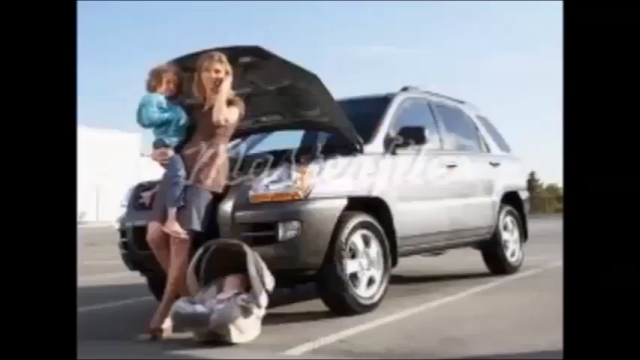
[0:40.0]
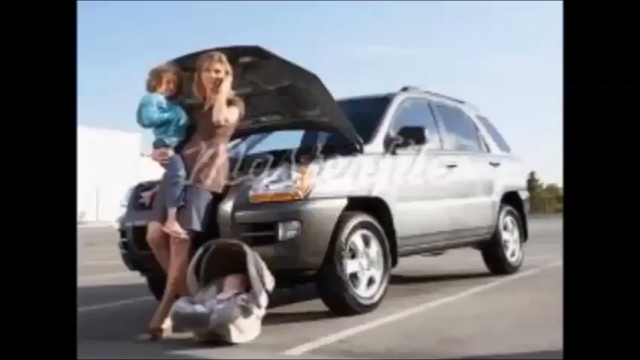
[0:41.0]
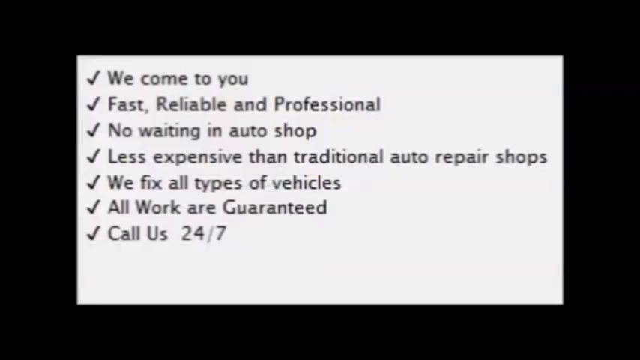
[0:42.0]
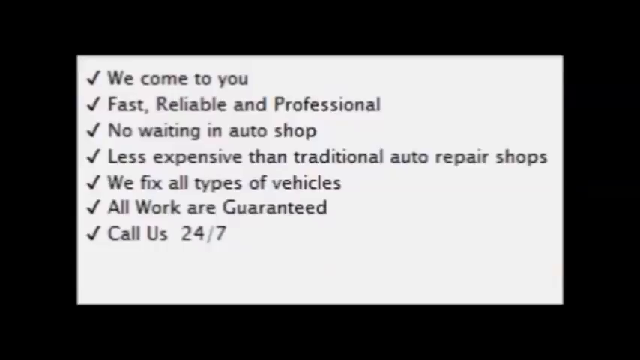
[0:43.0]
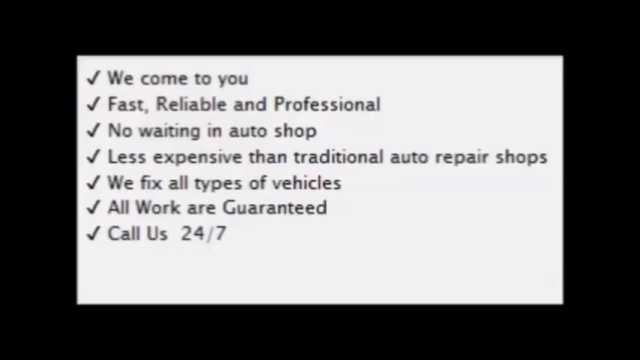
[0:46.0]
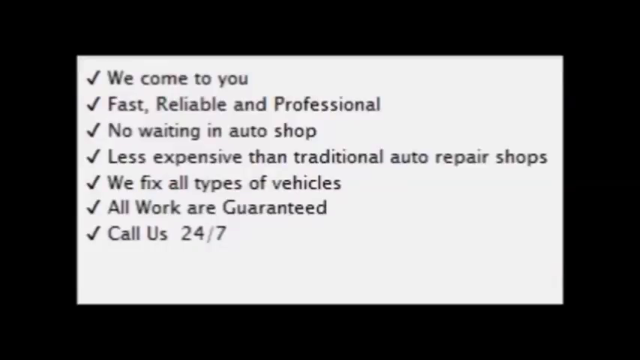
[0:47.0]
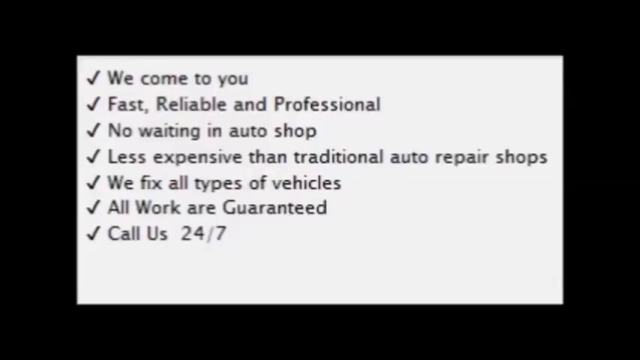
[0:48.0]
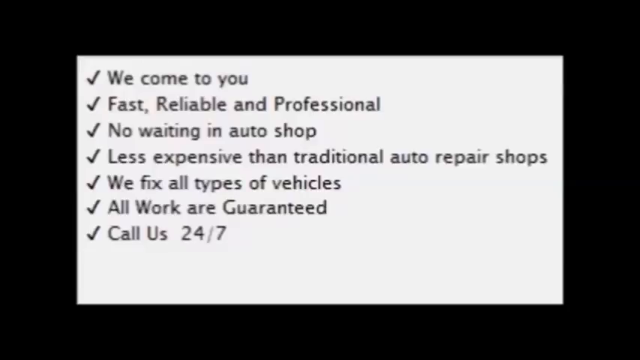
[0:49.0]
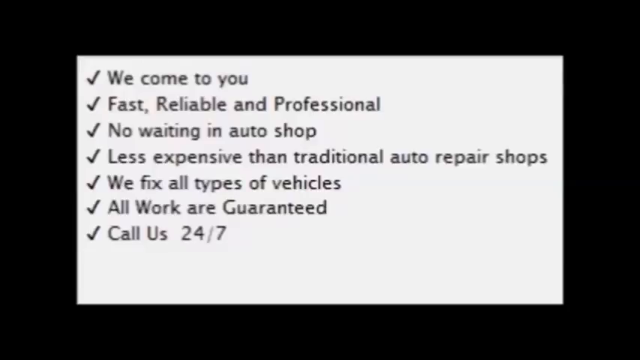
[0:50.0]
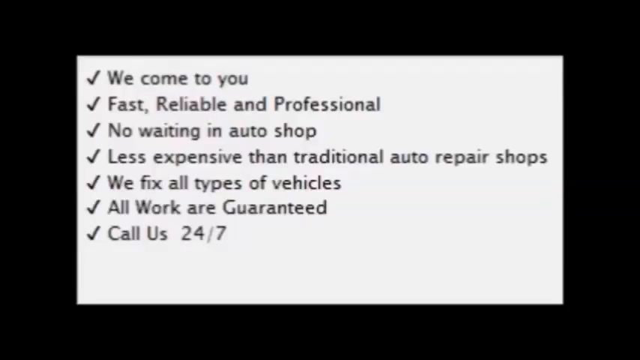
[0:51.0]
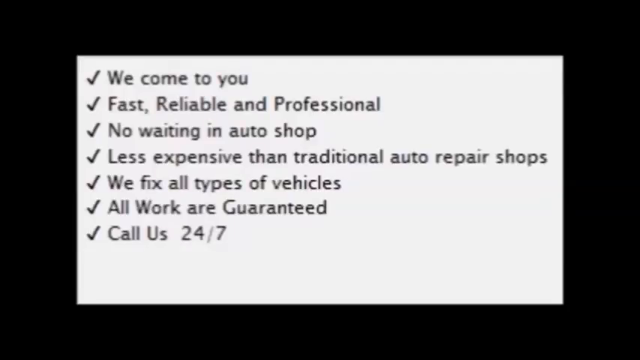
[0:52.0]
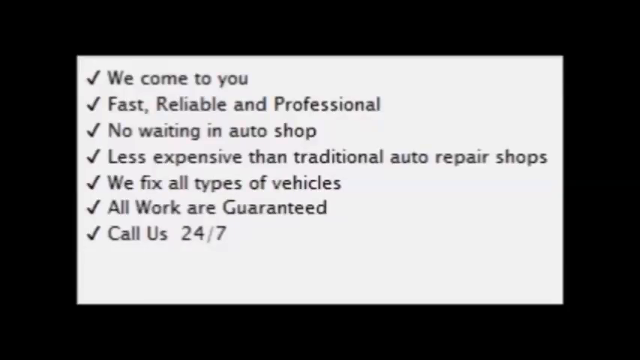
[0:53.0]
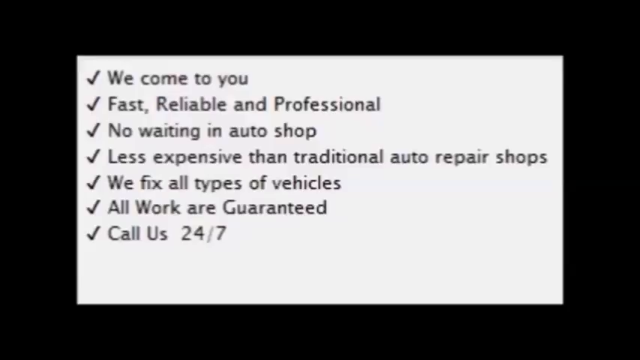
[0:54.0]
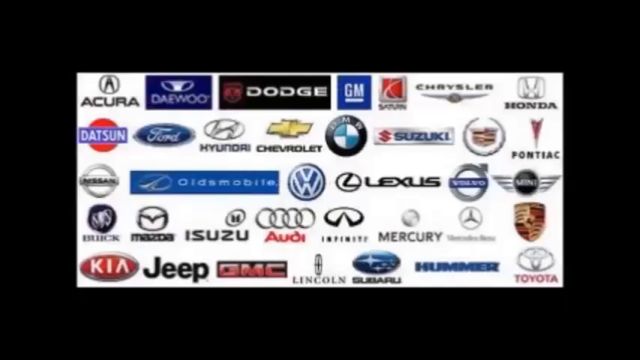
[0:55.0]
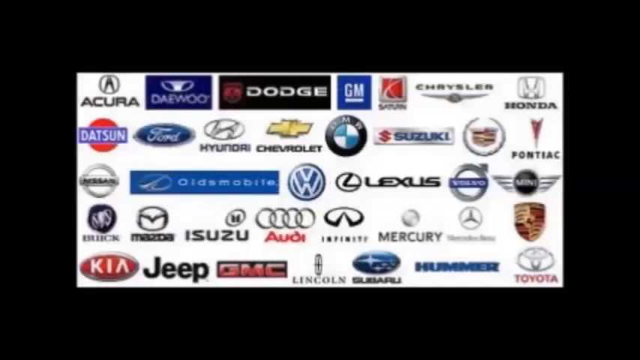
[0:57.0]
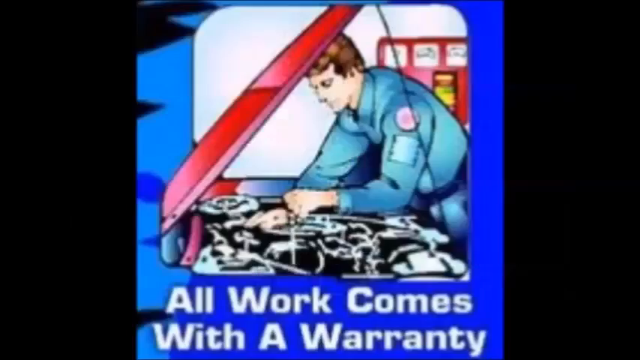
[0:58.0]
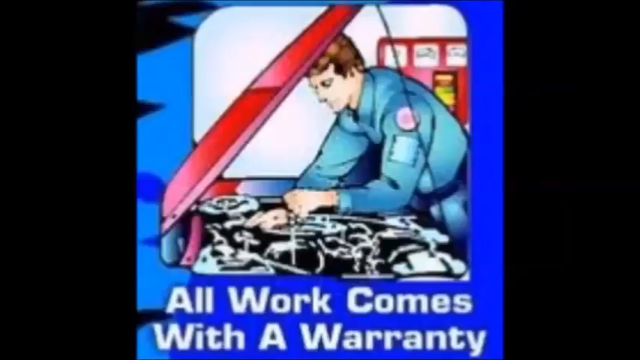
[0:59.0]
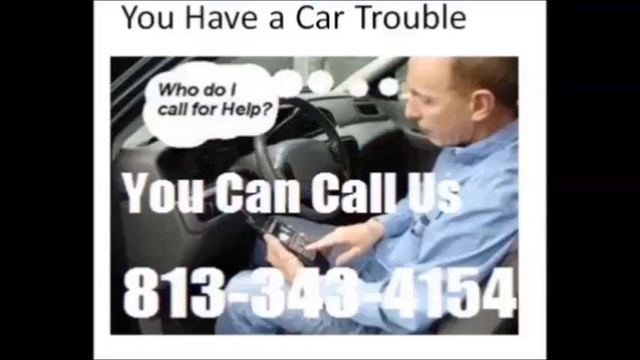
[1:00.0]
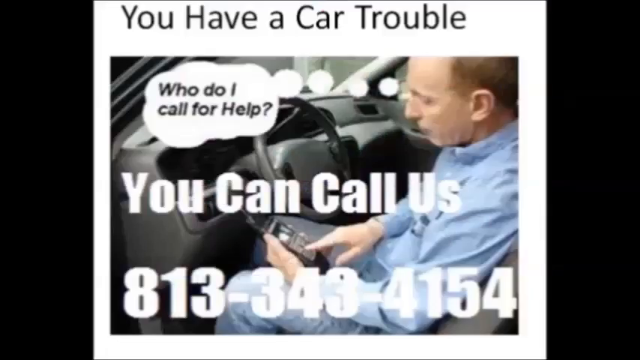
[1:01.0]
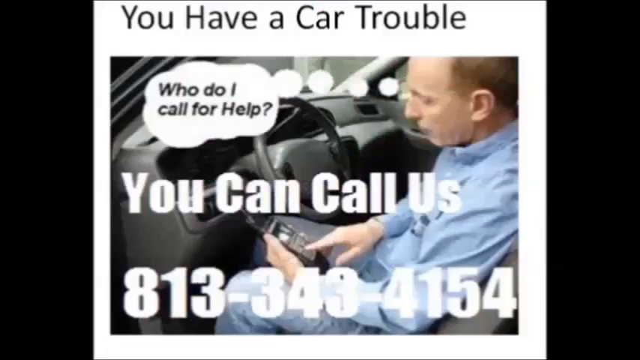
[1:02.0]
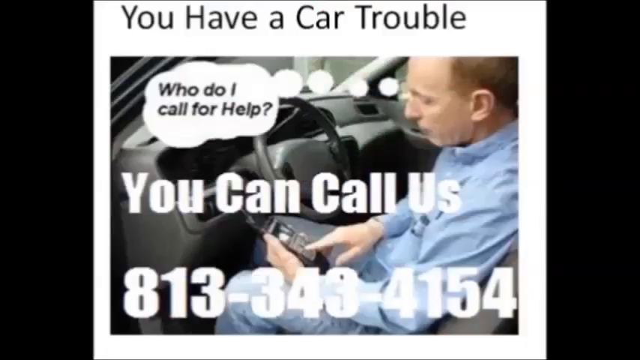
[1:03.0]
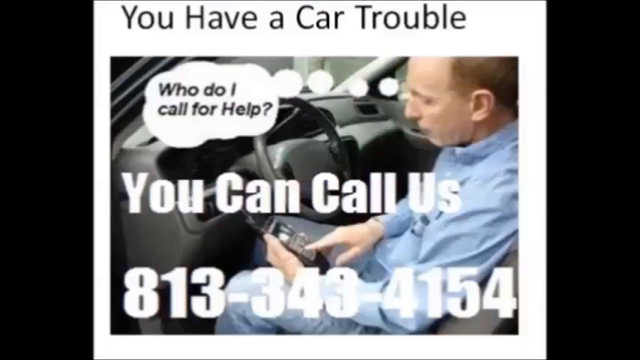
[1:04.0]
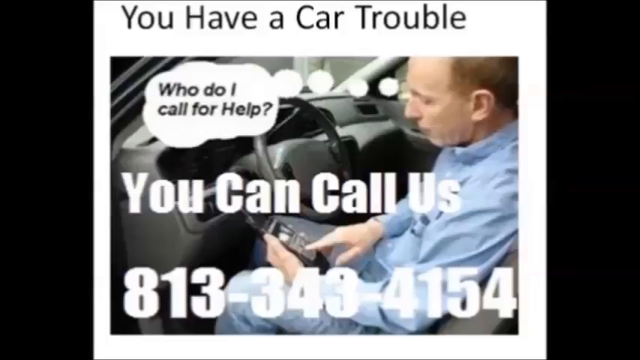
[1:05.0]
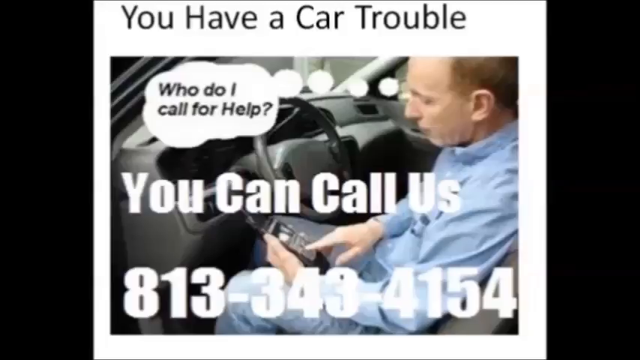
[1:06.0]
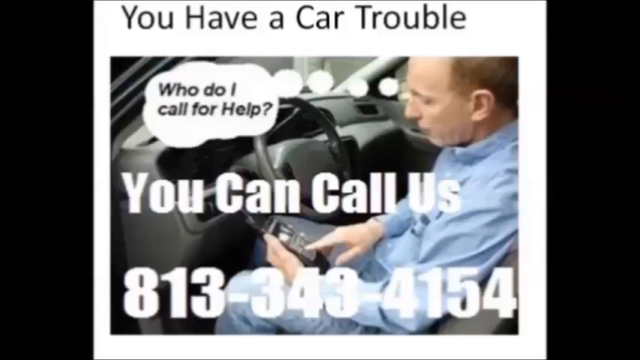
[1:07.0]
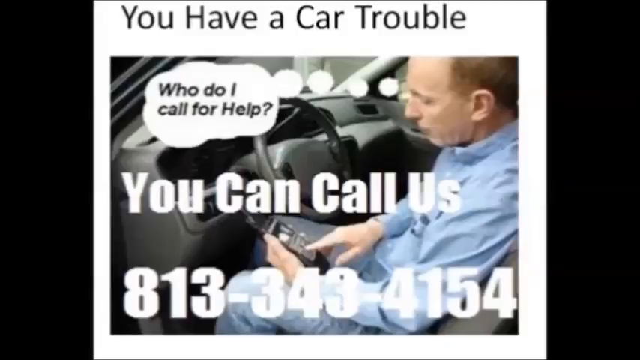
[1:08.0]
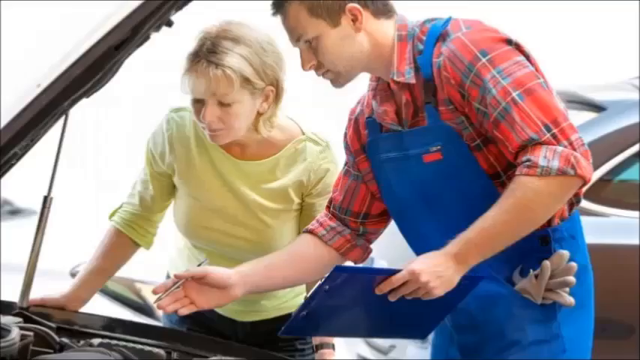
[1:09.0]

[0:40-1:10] The scene opens on a woman holding a young child on her hip, with a baby carrier beside her. A list of words follows: "we come to you fast and reliable and professional. no waiting in auto shop, less expensive than traditional auto repair shops. we fix all types of vehicles. all work are guaranteed. call us 24/7." The page is a white sheet with the words all in black. Next, vehicle brand emblems appear on the page, including Kia, Jeep, Acura, Datsun, Dodge, GM, Lexus, Mercury, Toyota, Pontiac, Honda, Chrysler and various others. Then the text reads "all work comes to you. you have car trouble, call. you can call us. who do I call for help?" and the phone number is given in the last section. A man is then shown helping a woman who is looking under the hood of her car.